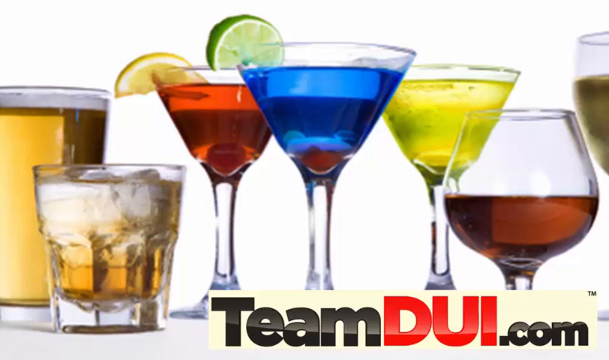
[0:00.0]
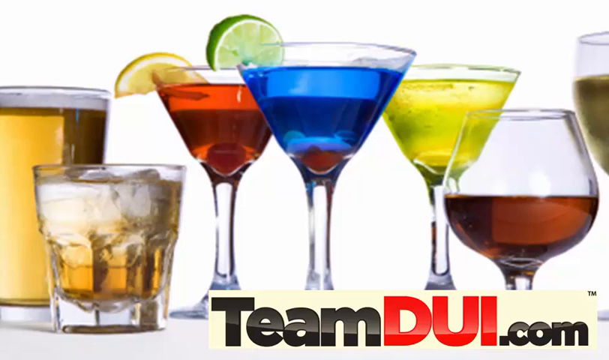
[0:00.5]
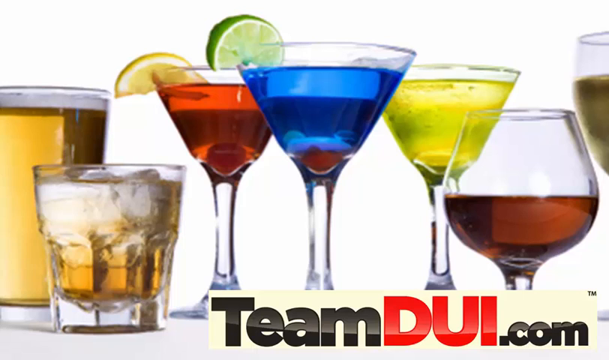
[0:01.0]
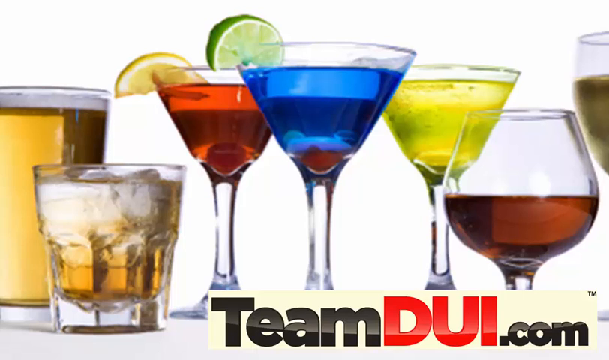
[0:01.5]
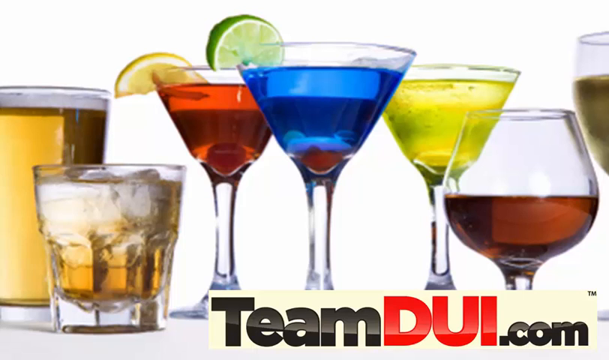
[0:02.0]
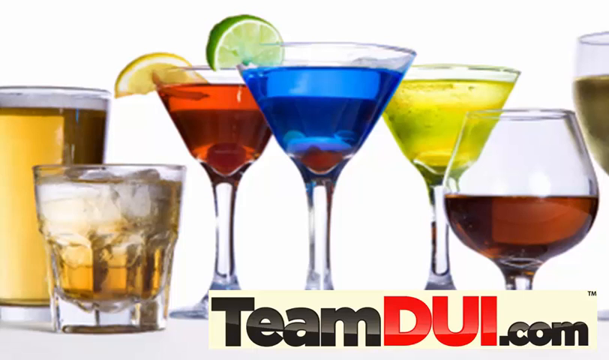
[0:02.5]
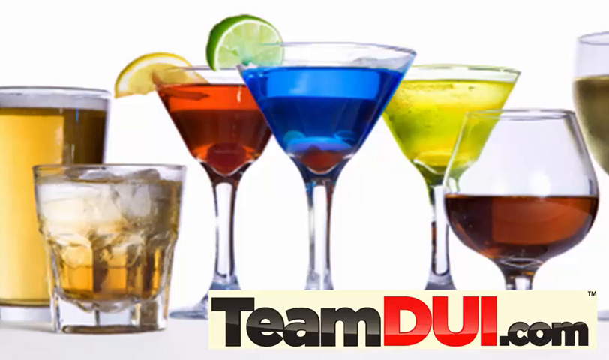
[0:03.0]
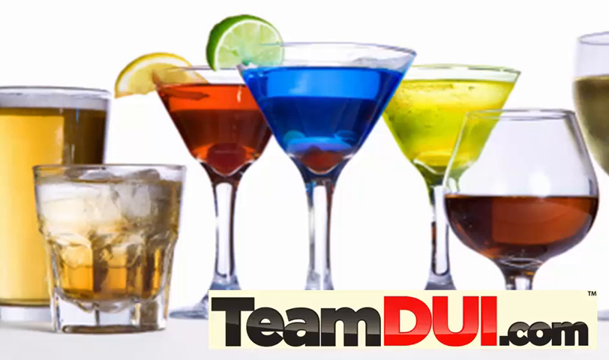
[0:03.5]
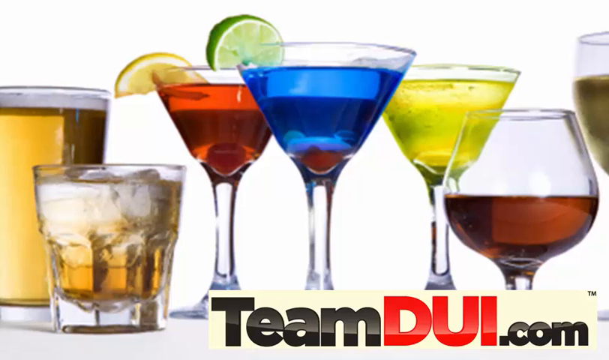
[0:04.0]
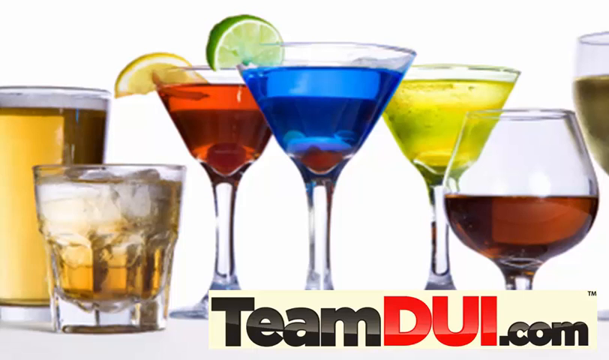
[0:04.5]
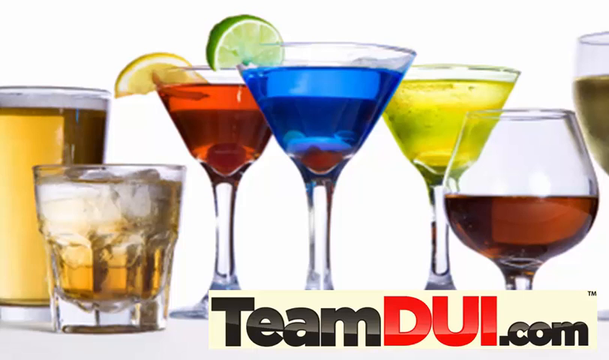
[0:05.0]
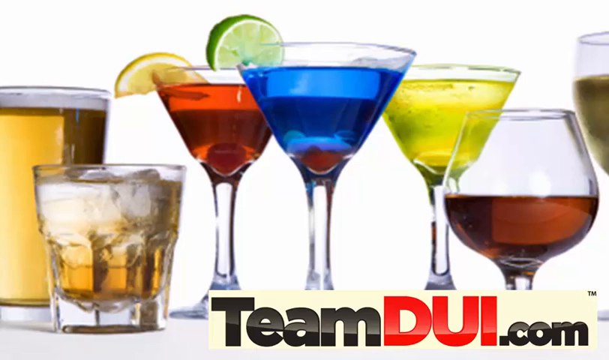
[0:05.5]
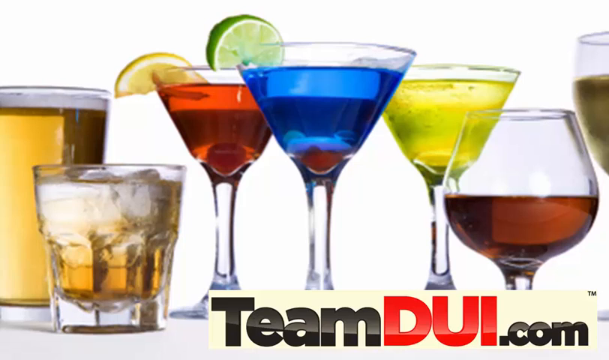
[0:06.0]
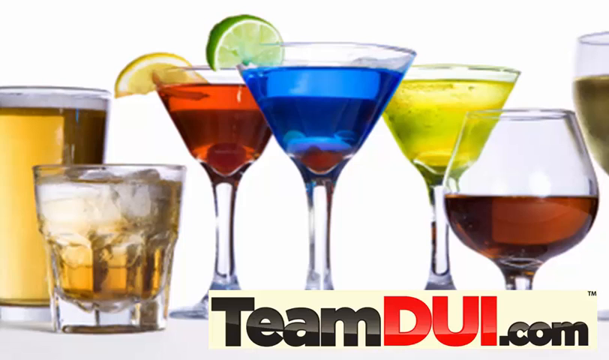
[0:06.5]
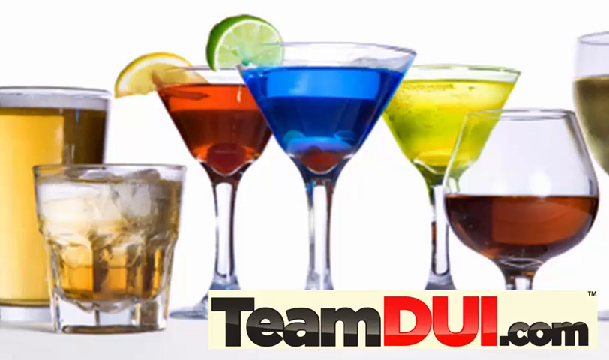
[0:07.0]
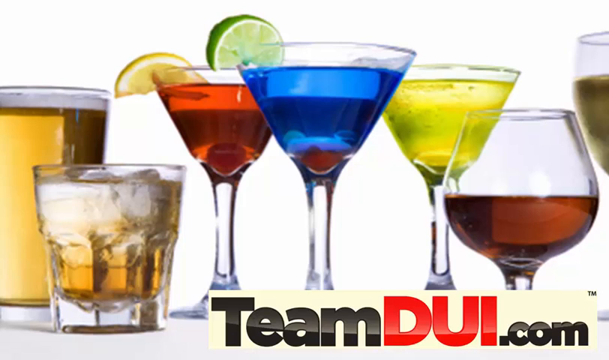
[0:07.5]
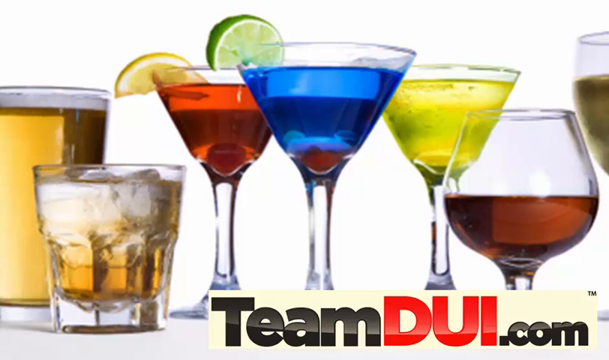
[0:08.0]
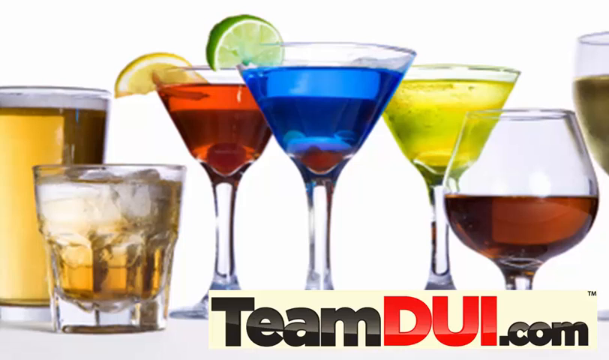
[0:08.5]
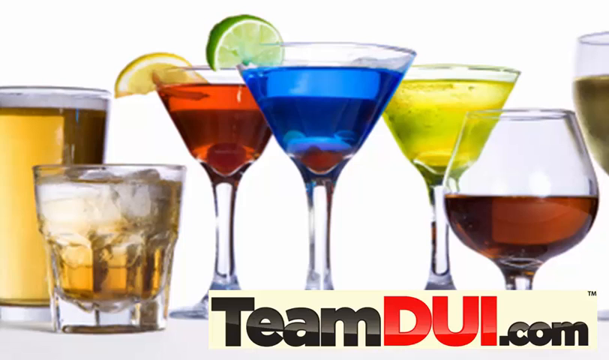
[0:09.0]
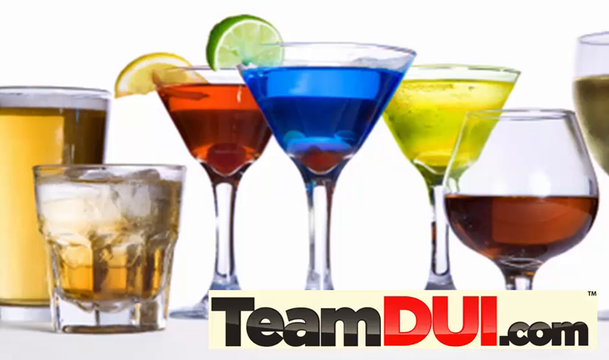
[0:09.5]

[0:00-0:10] This public service announcement-style piece from teamdui.com opens on a white background with a whole bunch of drinks and cocktails. A draft beer is on the left, with what may be a whiskey next to it on the right. In the middle are three cocktails: a blue one in front, with a red one behind it and a yellow one on the right. There is also a glass of port or sherry or something similar, and another glass of white wine. At the bottom right is the logo in a sort of beige box: "team" in black letters with a capital T and a lowercase "eam", "DUI" in red capitals, and a lowercase ".com" in black.